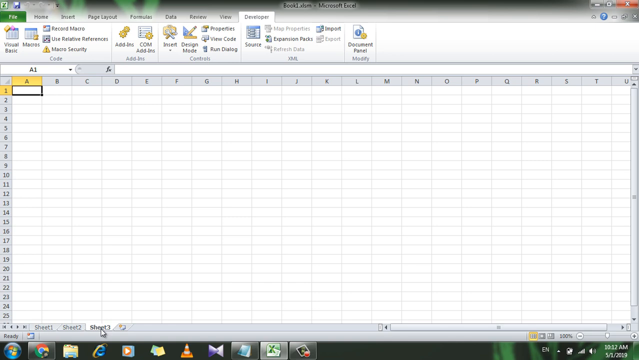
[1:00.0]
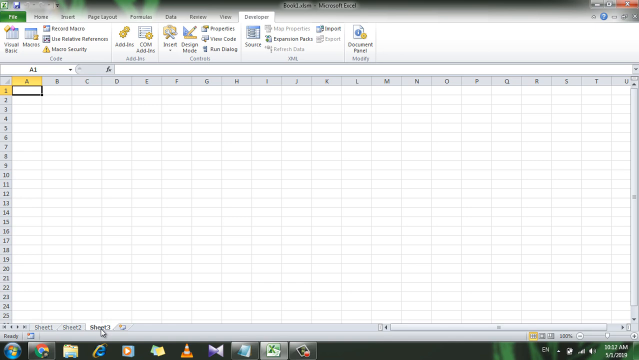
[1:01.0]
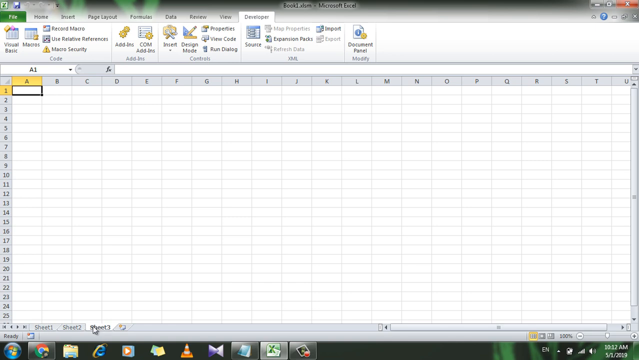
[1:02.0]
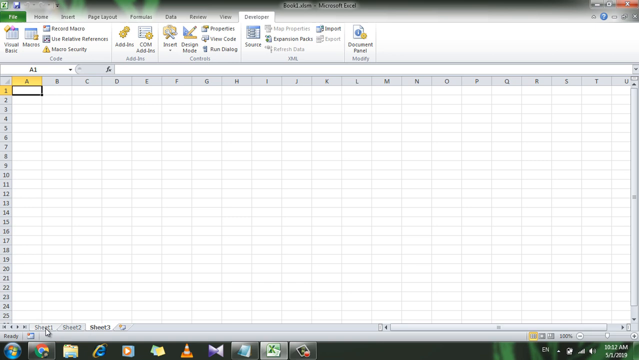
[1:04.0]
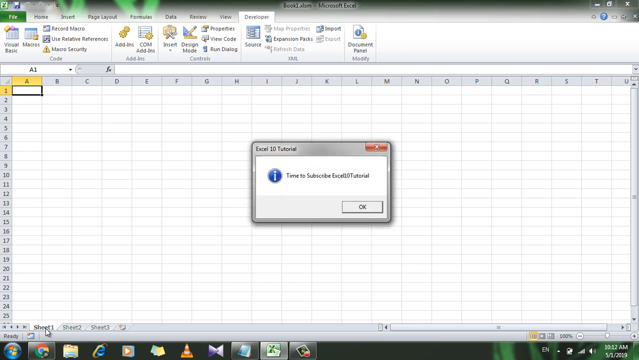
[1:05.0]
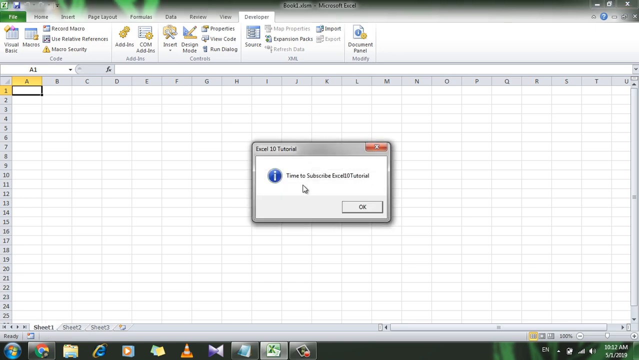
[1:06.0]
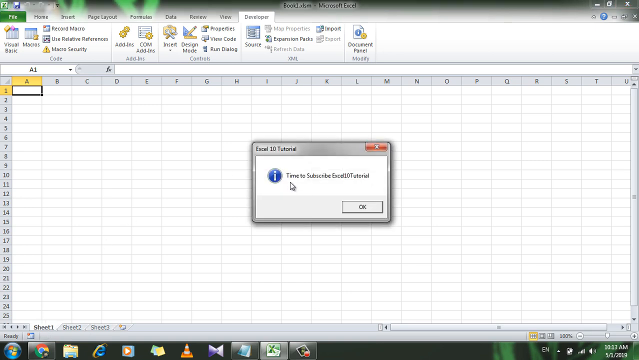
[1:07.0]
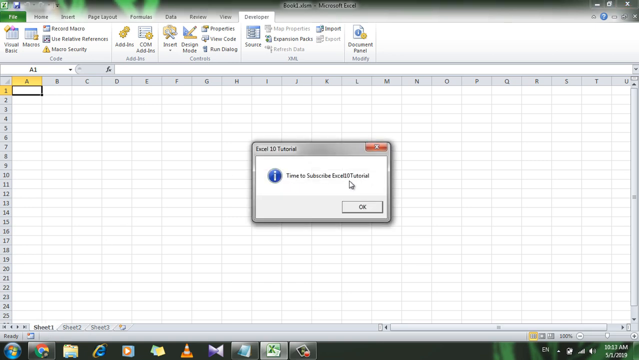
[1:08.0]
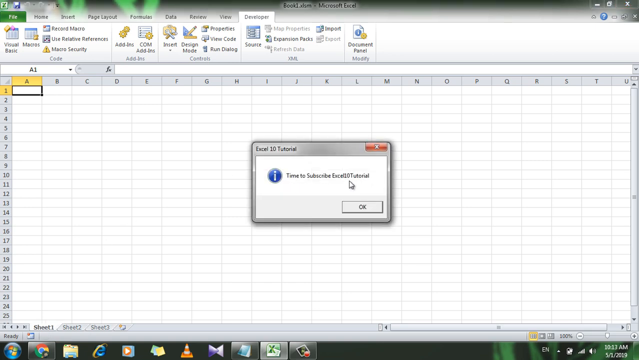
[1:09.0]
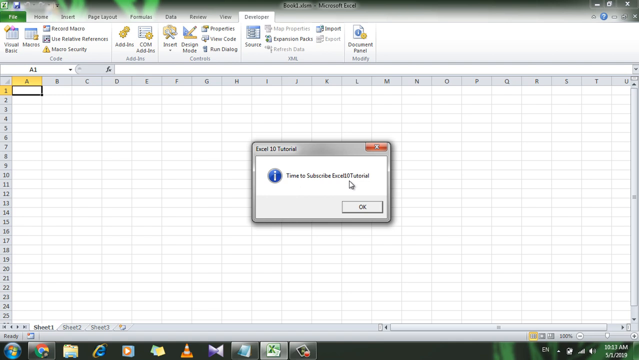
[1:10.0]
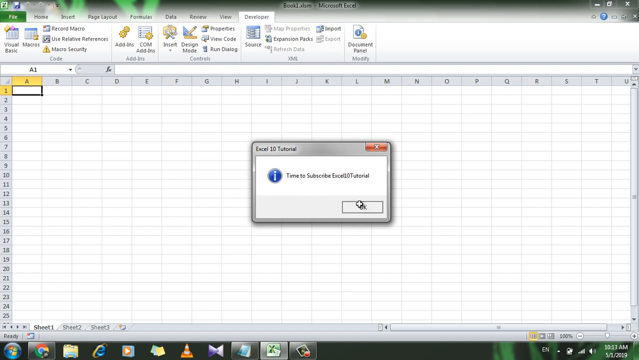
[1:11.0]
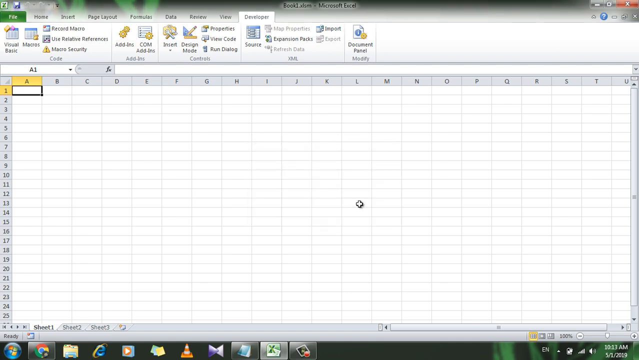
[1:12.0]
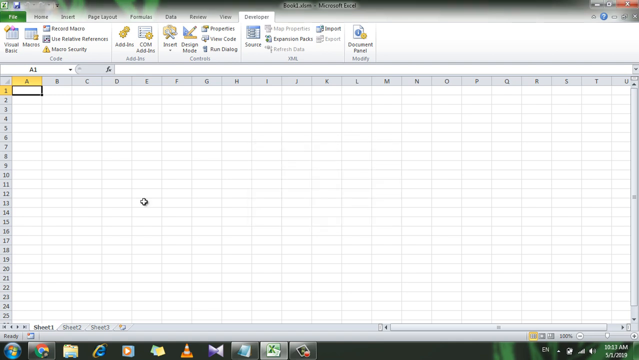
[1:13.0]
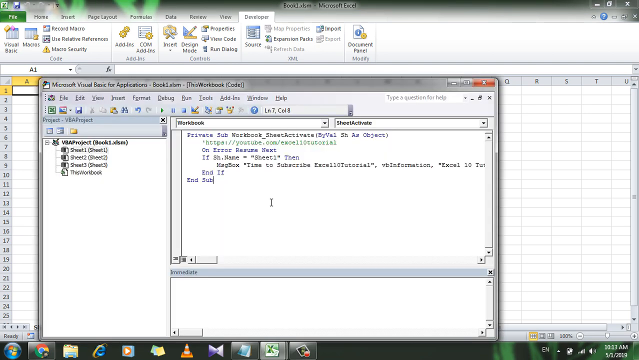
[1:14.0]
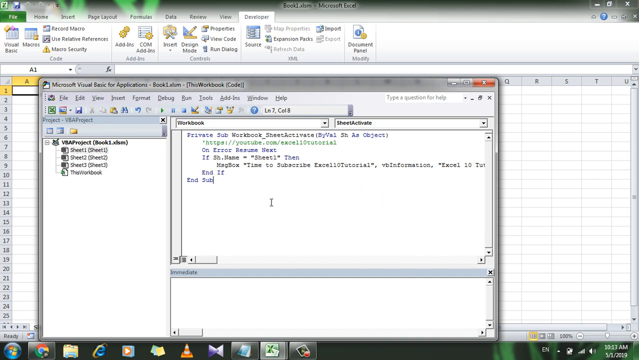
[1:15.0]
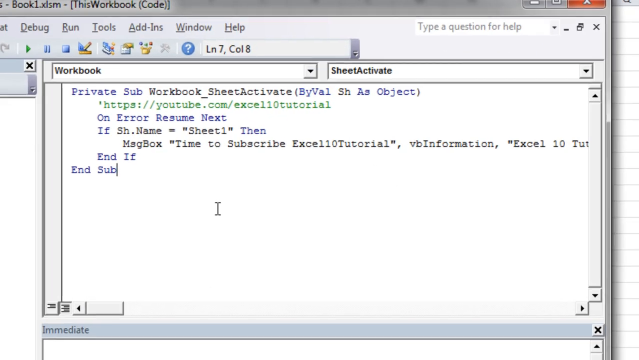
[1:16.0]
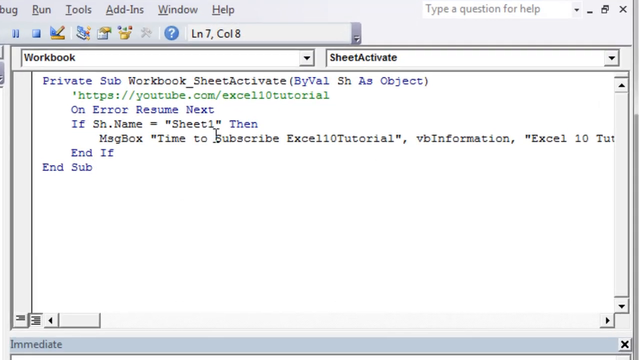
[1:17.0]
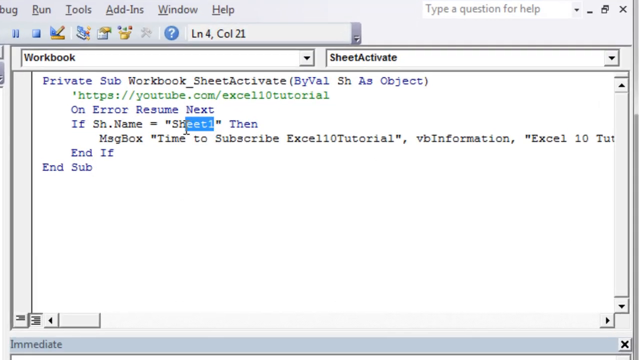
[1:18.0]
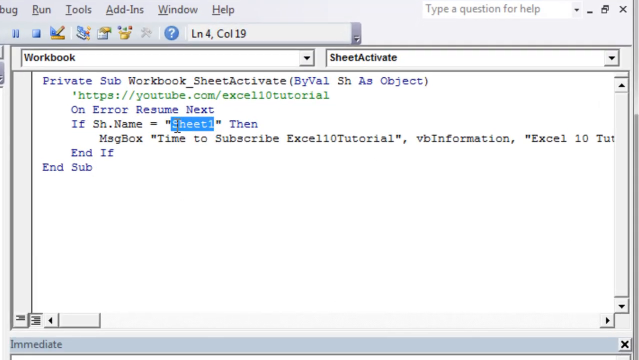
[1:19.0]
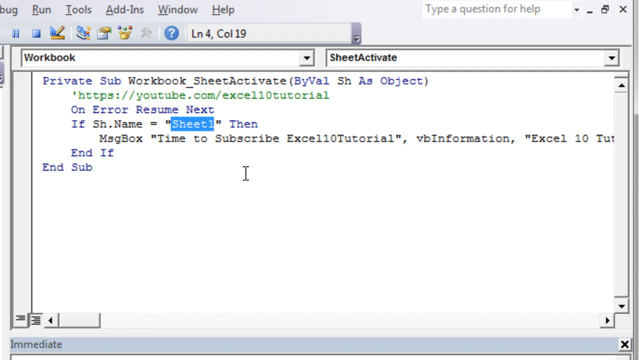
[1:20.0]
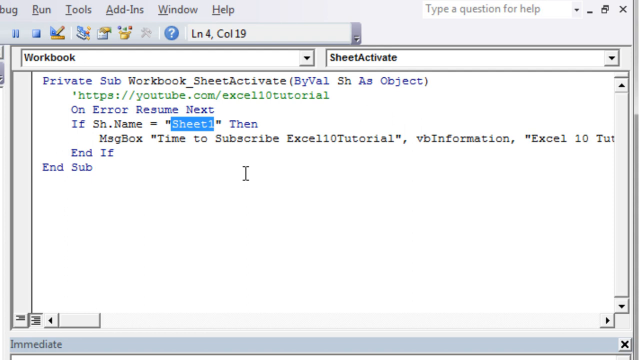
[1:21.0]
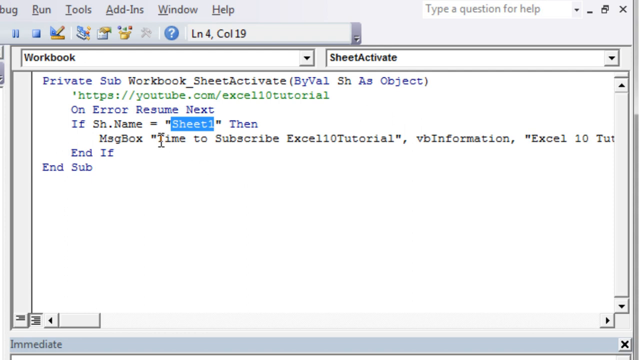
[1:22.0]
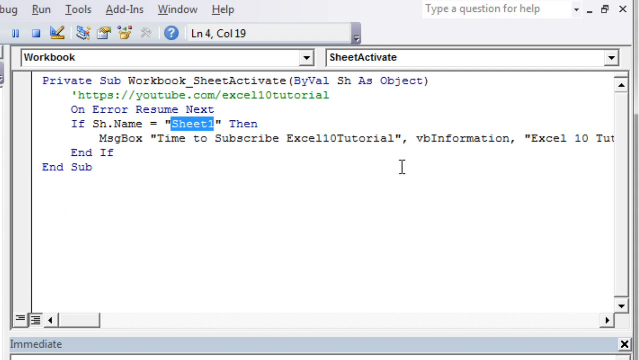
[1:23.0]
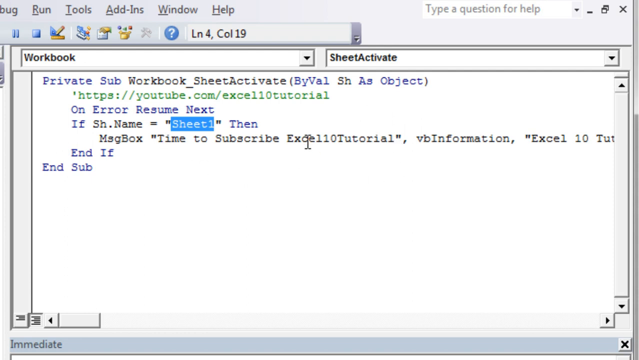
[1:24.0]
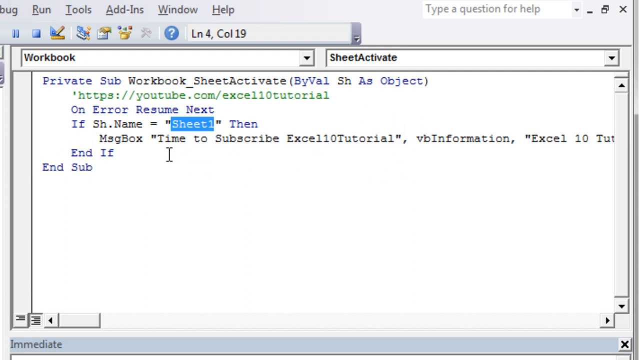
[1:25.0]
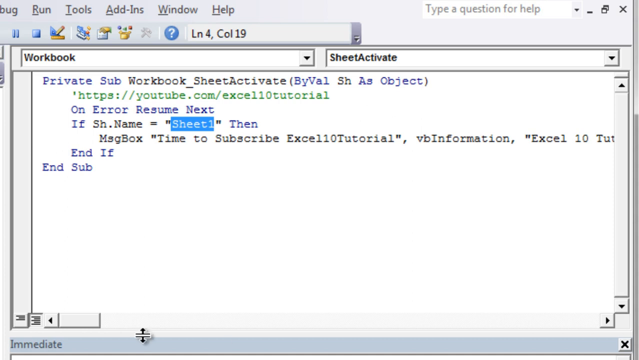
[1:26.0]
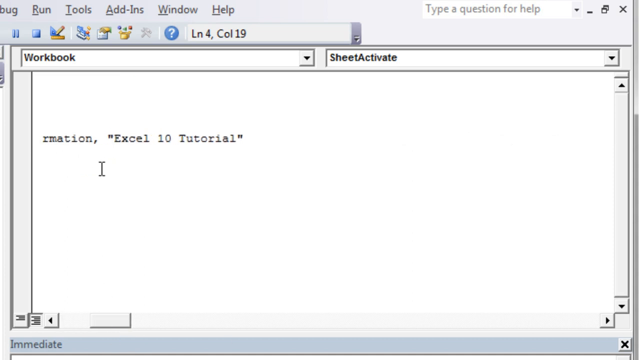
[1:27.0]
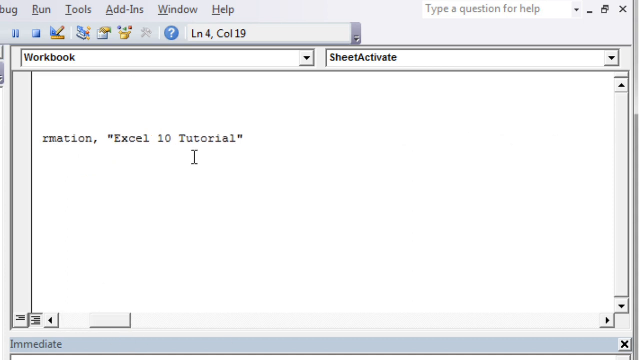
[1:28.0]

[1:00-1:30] The image stays still for a little while before the same small window pops up, showing "Excel 10 Tutorial, Time to Subscribe, Excel 10 Tutorial" with a small OK button at the bottom right. The user moves the mouse over the text so it can be read, then clicks OK, and the small window disappears. They then open a new window showing the script from before: Microsoft Visual Basic for Applications, Book 1 XLSM, with the pasted code on the right side of the window. The screen zooms into the code, and the user highlights the Sheet 1 text within it. After moving the mouse around a little, they move the mouse down to slide the view over to "Excel 10 Tutorial", showing all of the code.